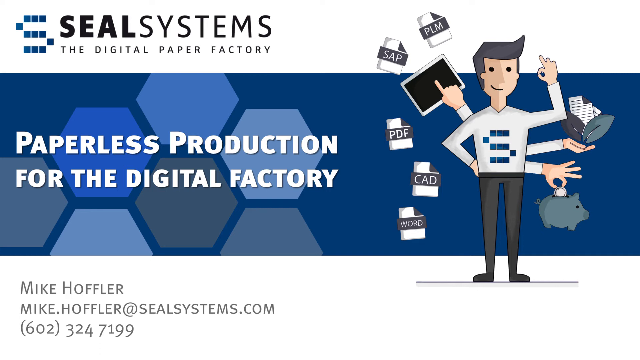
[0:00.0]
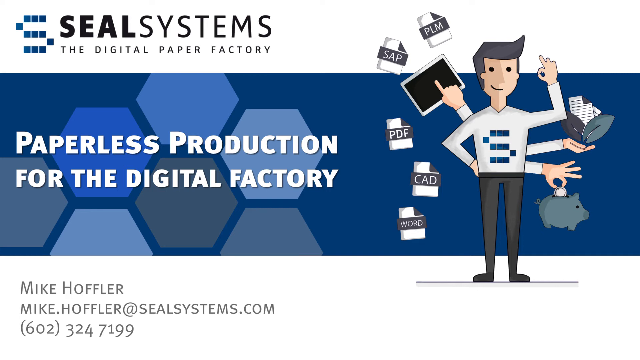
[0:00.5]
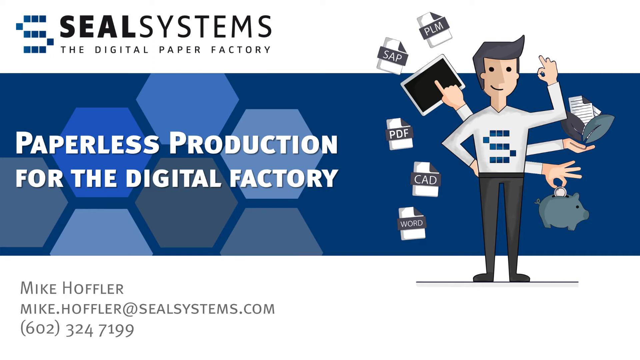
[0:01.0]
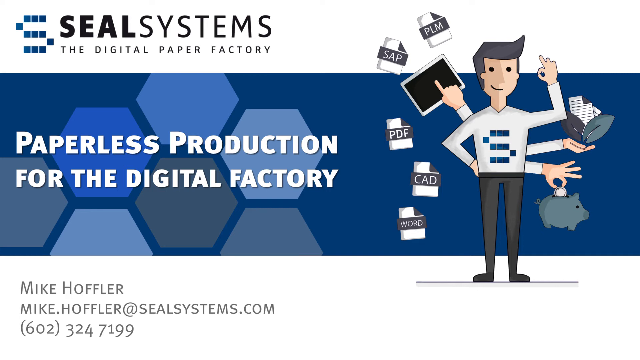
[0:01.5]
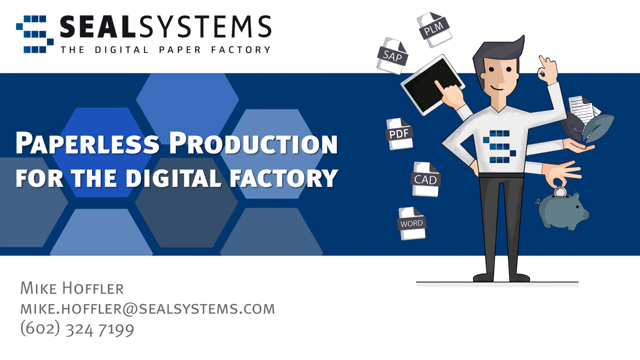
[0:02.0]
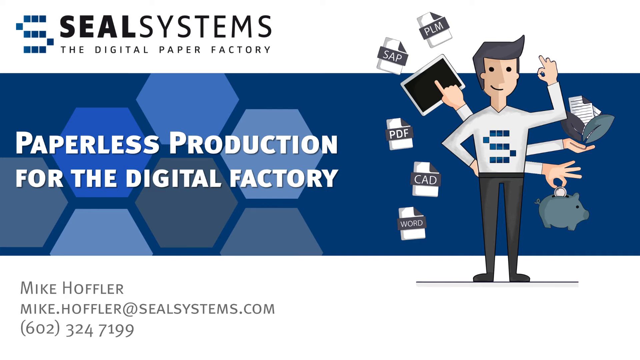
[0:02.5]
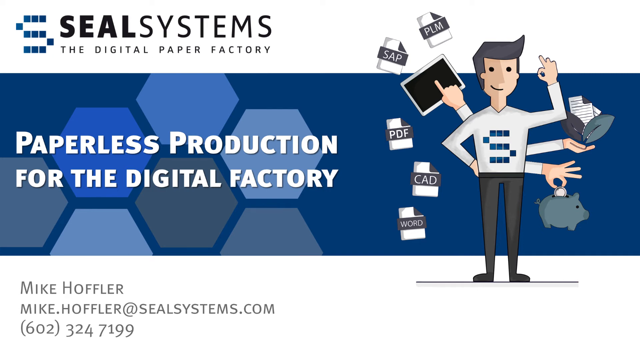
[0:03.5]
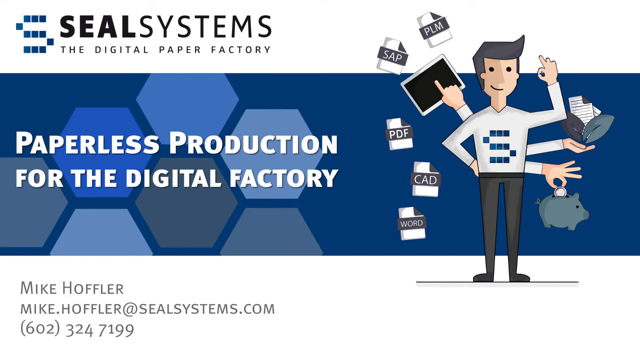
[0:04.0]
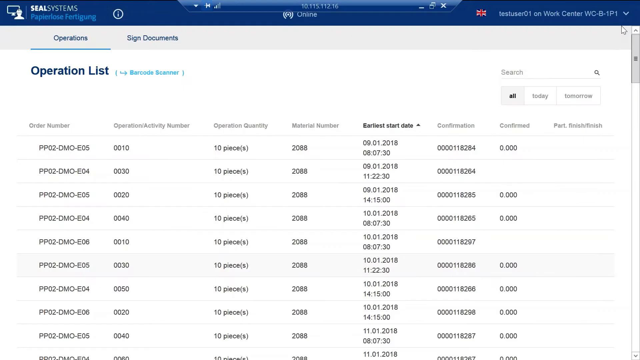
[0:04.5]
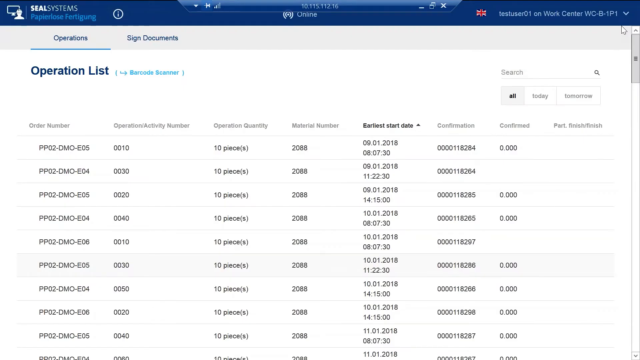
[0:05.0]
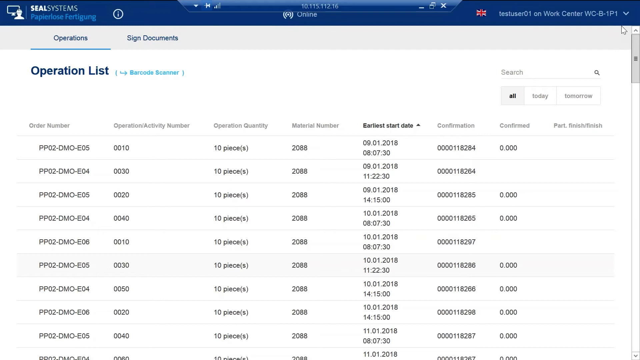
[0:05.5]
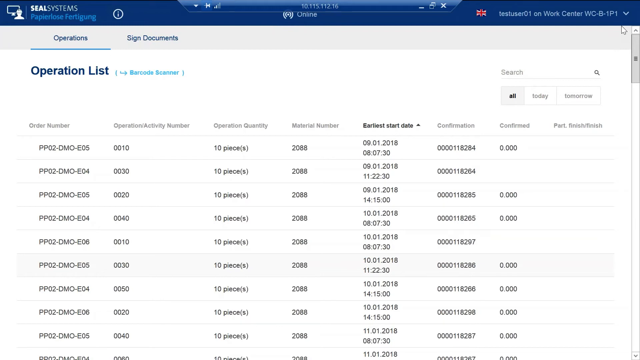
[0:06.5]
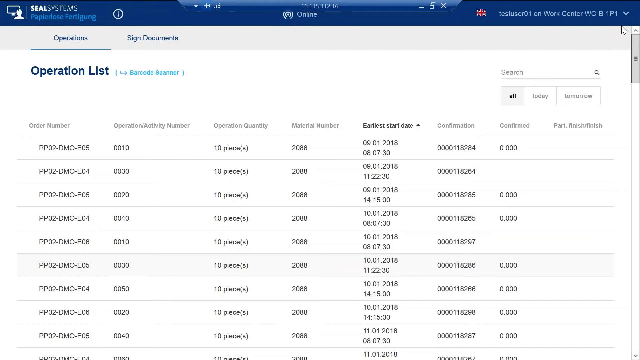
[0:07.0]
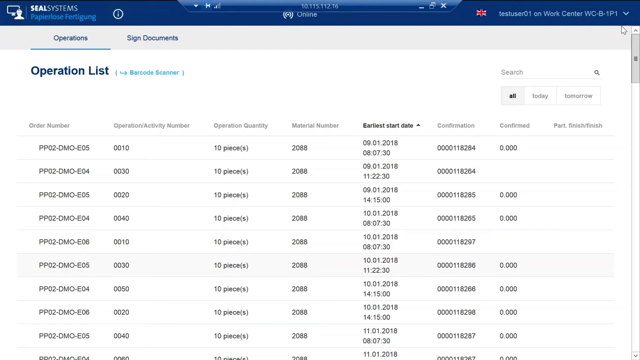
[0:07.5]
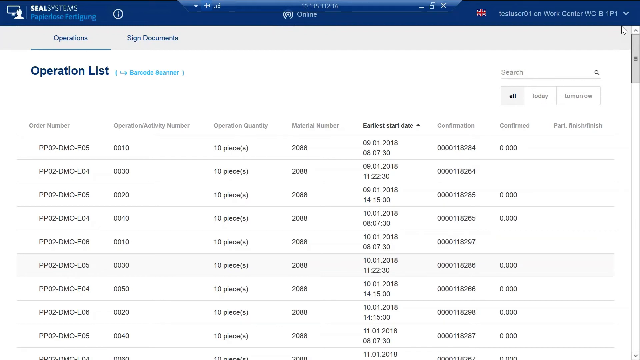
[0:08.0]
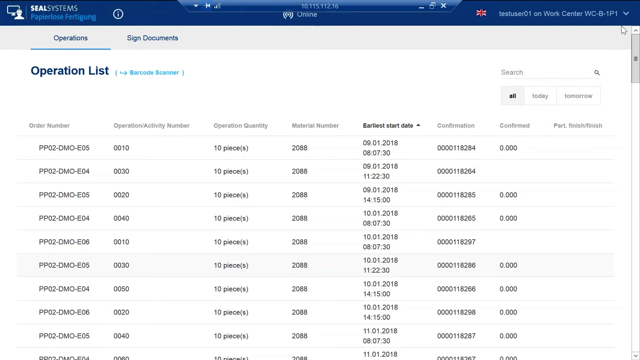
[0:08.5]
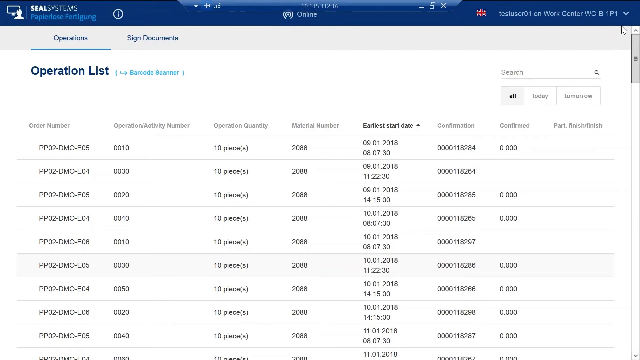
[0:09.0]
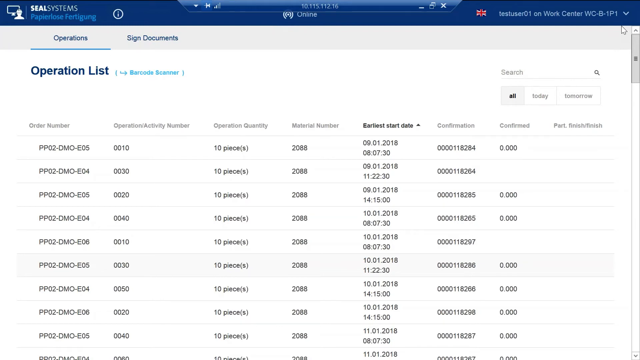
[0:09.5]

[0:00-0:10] The video opens on a presentation-style screen. In the top right-hand corner is a company logo for Seal Systems, the digital paper factory. In the centre is the video's title, "Paperless Production for the Digital Factory". To the right of the title is an infographic of a cartoon man surrounded by a laptop, a piggy bank, documents and some smaller document icons for things like PDF and CAD. In the bottom left-hand corner are a name, email address and contact details for Mike Hoffler. The video then transitions to a screenshot from an application showing an operations list, an embedded table with eight columns covering things like order number, quantity and date information.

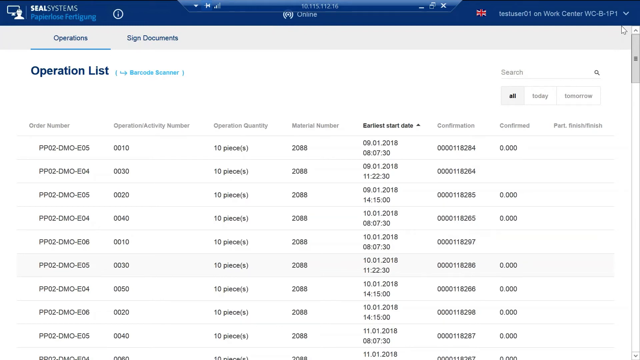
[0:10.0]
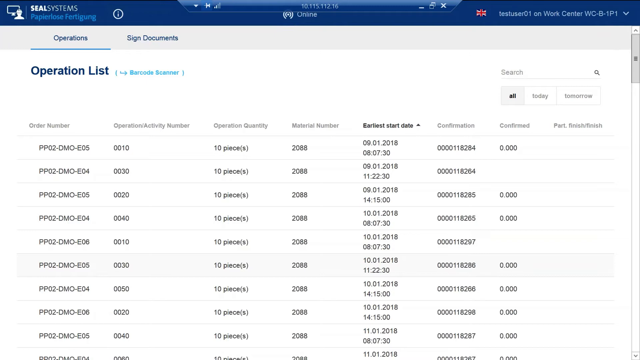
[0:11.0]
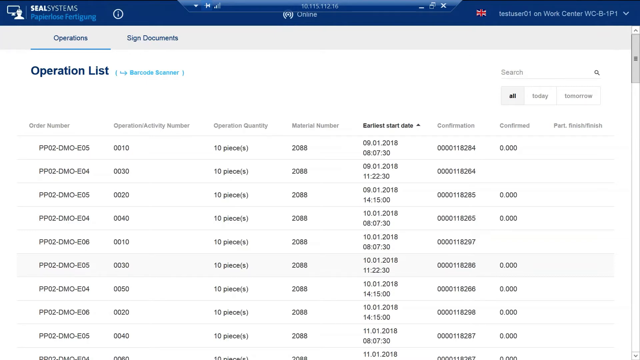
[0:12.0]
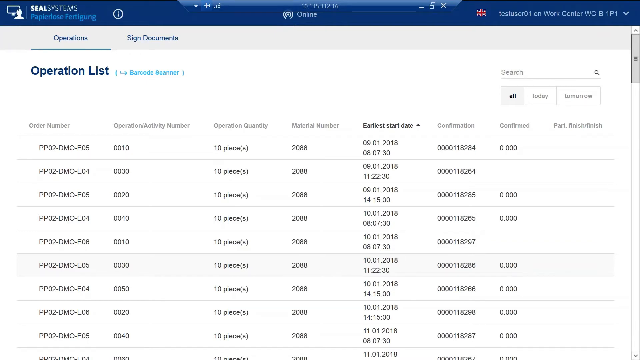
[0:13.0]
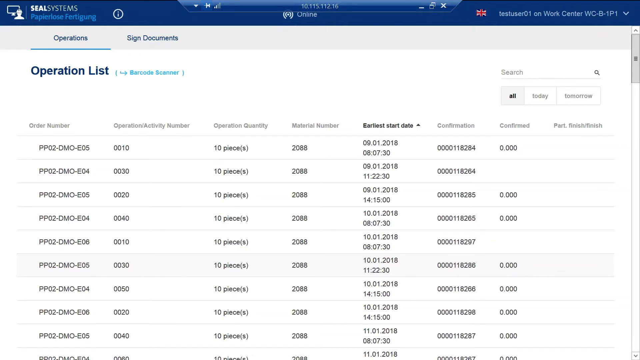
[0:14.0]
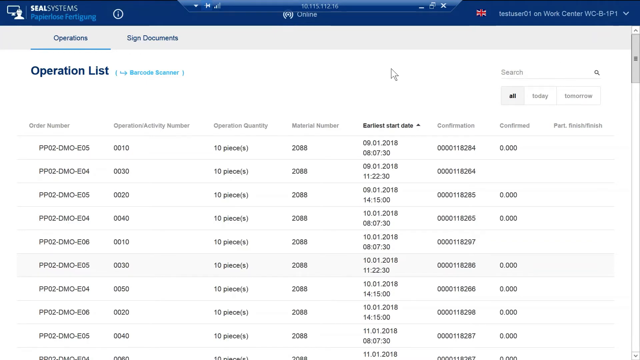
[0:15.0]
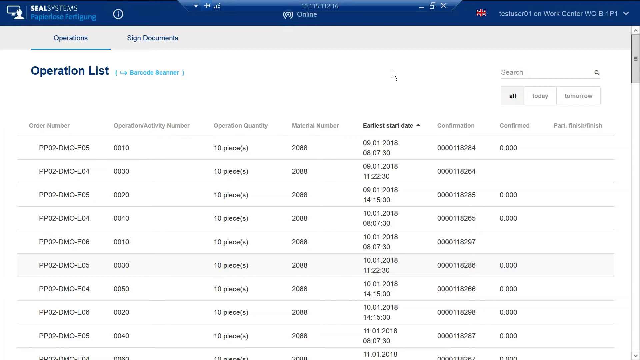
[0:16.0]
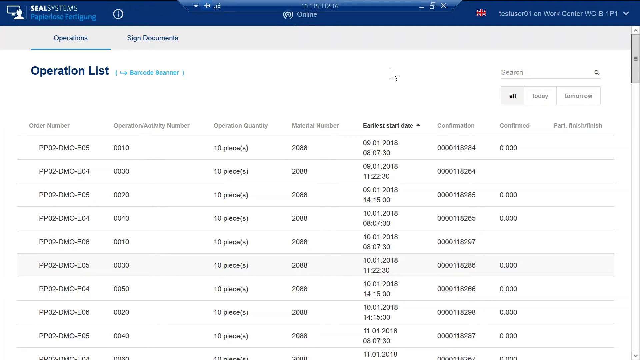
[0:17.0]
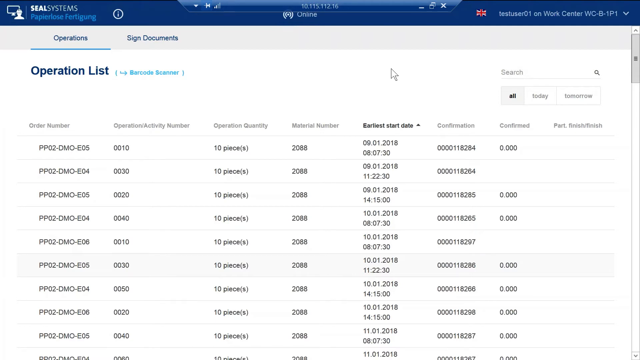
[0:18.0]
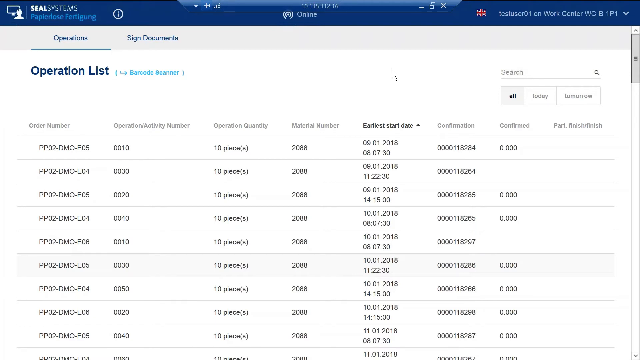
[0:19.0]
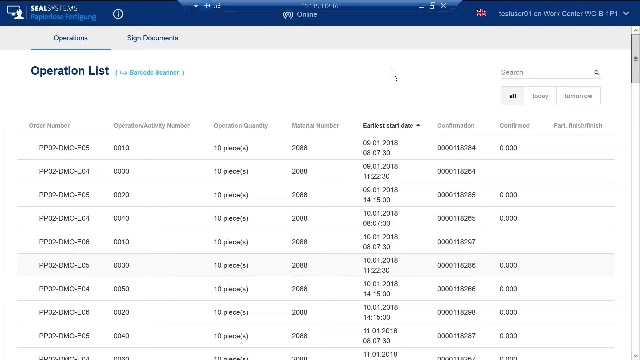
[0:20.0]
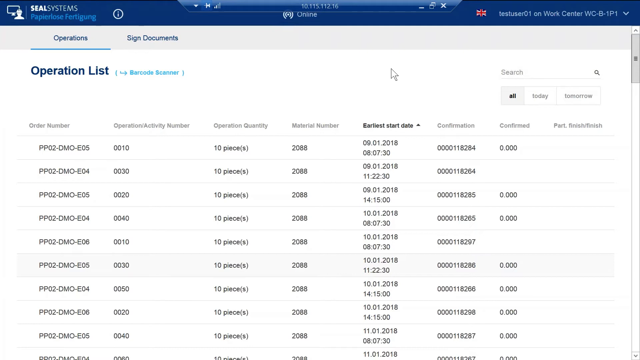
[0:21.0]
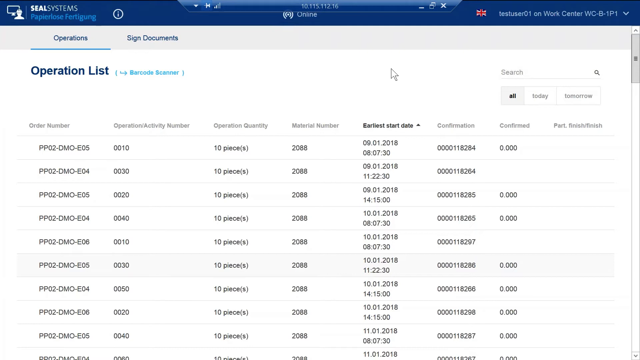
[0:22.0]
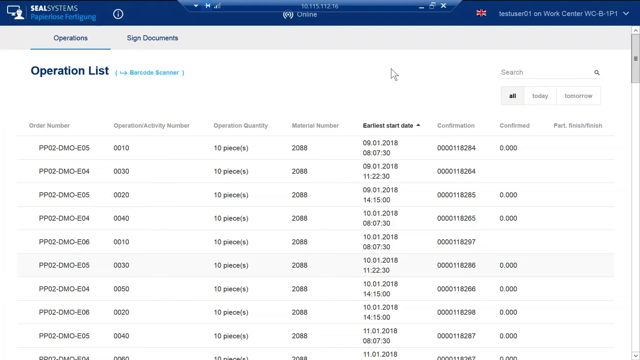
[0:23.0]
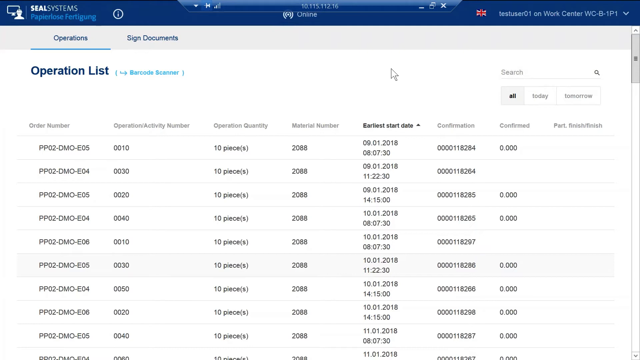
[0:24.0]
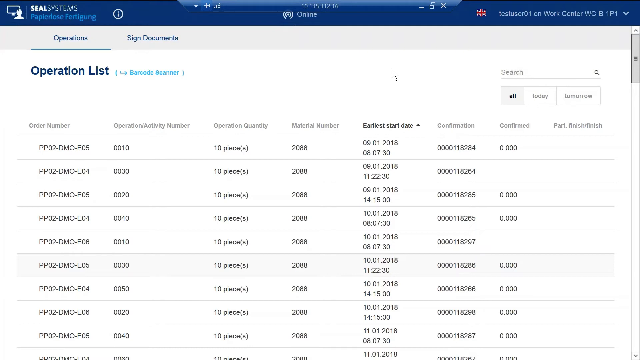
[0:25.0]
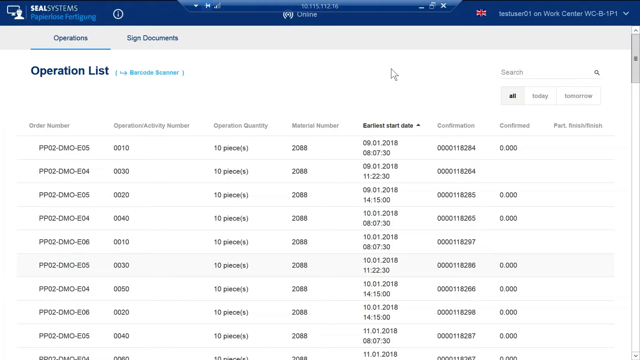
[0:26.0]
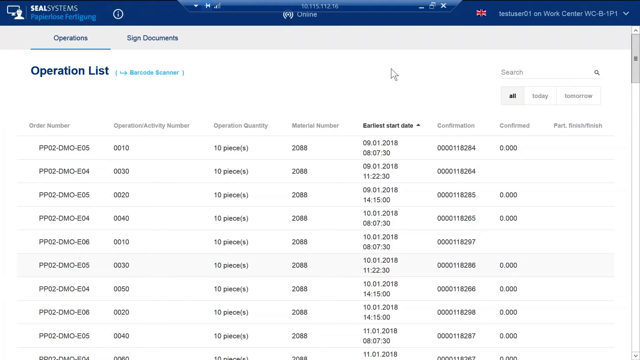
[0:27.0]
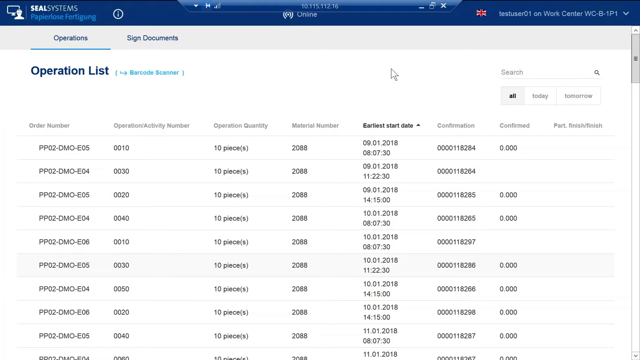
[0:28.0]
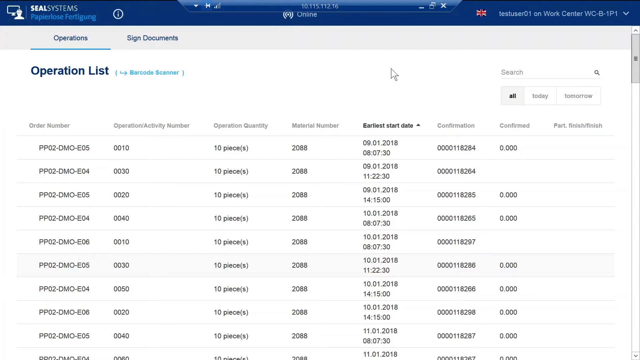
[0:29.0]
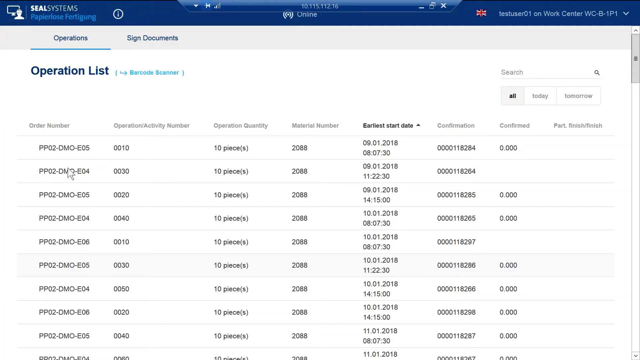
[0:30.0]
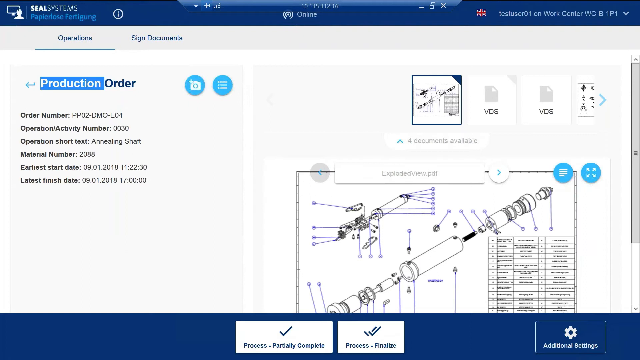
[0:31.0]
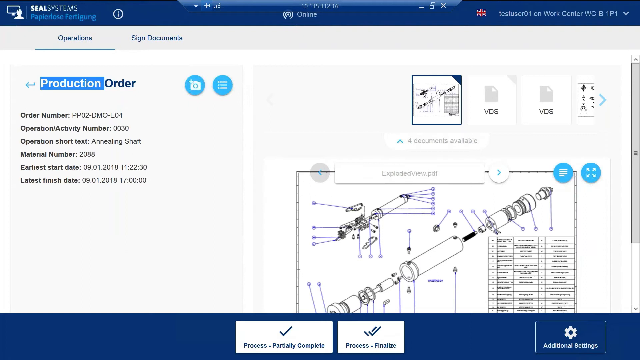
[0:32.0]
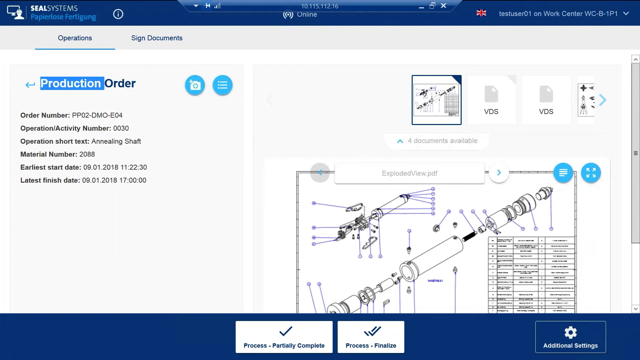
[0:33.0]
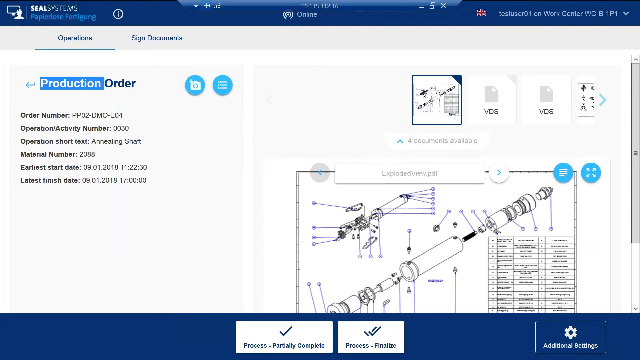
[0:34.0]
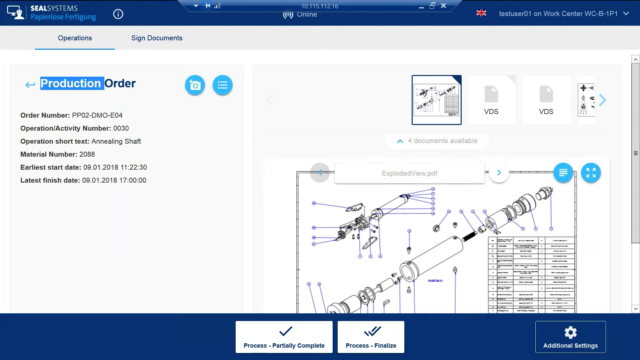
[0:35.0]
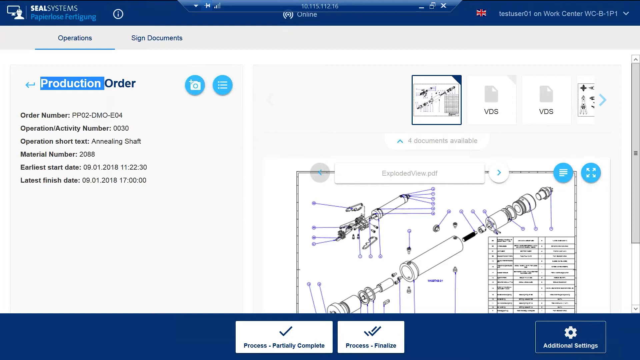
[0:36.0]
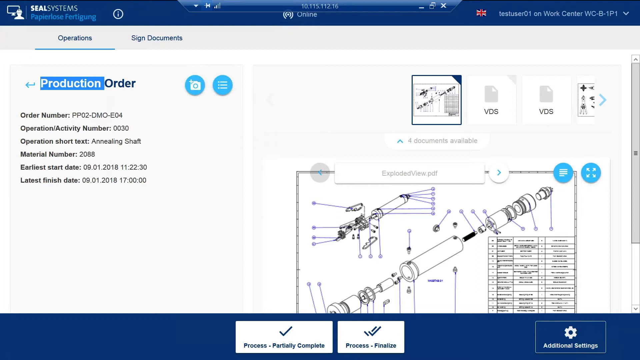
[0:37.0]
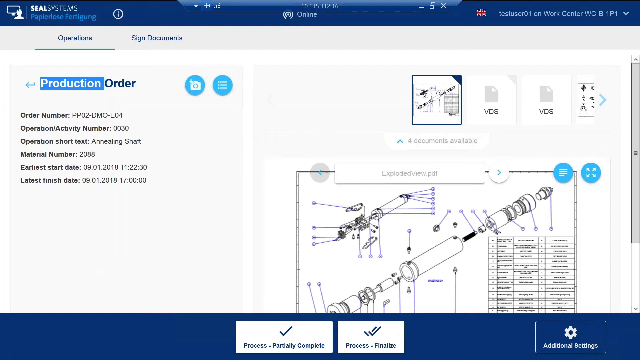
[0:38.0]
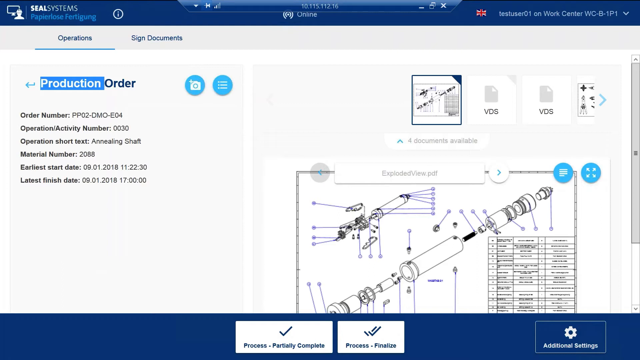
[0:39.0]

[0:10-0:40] A screenshot from an application system for the company Seal Systems is shown, logged in as a test user and displaying an operations list embedded table. On the right side are a search function and a filter button with options for all, today and tomorrow; the all filter is selected. The embedded table has eight columns with data points for some kind of order number, quantity, material number, earliest start date and a confirmation number. This screen is held for about 20 seconds, then transitions to another screenshot from the same SEALSystems system showing a production order summary page. There is a list of different data points for this order, and on the right side there is a diagram-type document for an Annealing Shaft.